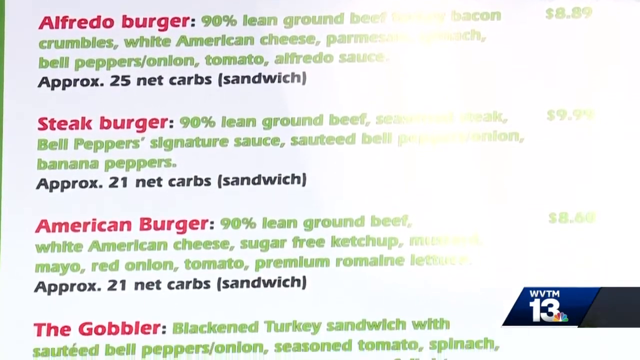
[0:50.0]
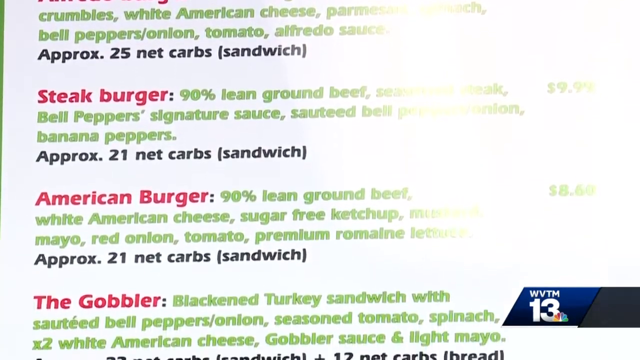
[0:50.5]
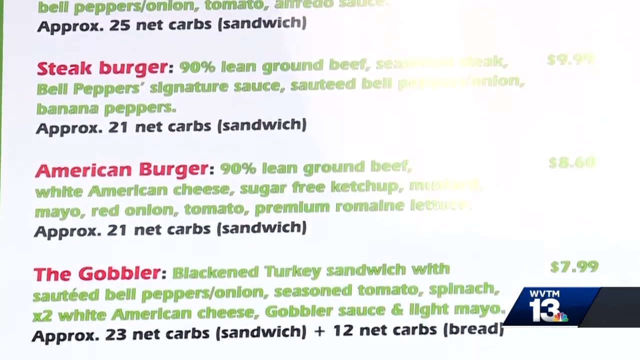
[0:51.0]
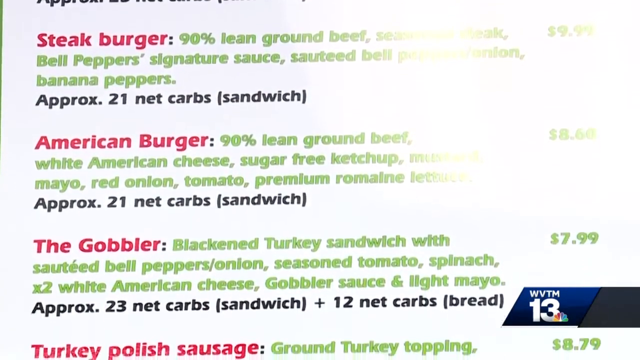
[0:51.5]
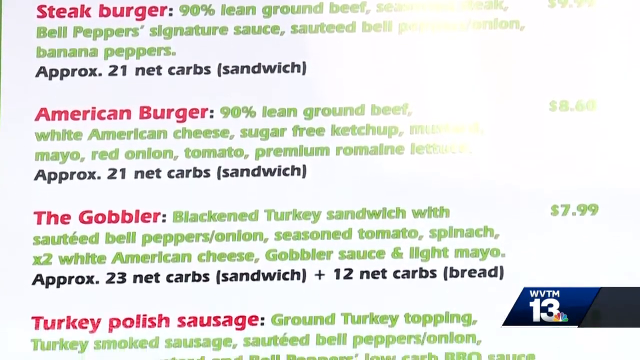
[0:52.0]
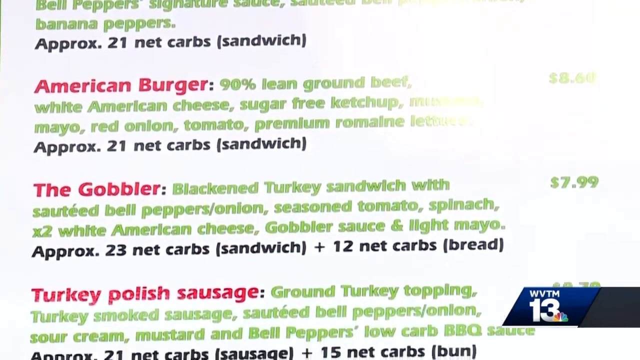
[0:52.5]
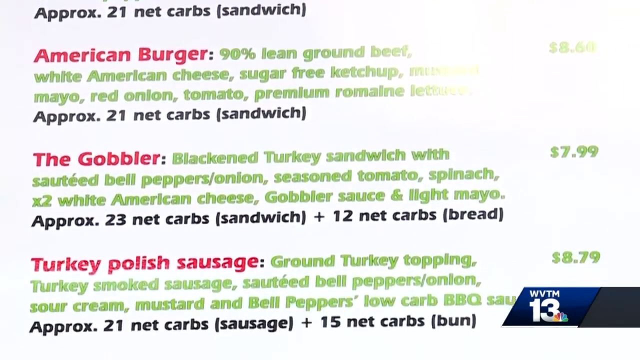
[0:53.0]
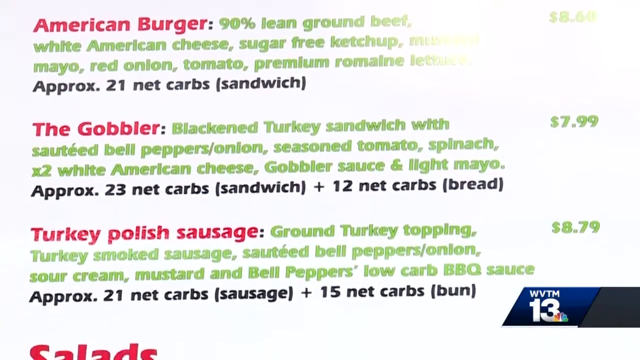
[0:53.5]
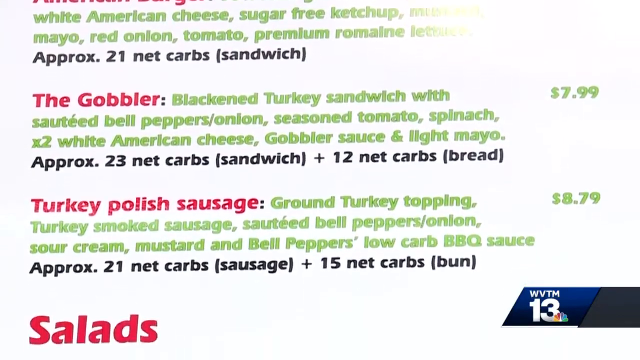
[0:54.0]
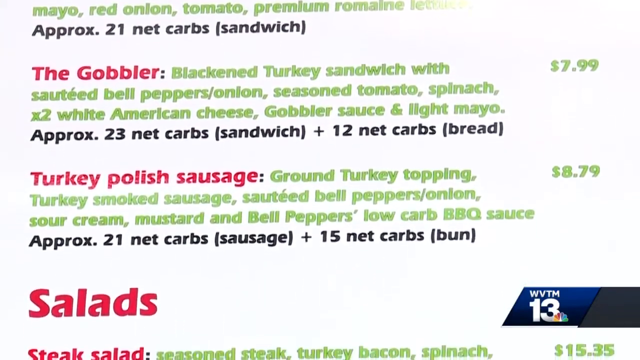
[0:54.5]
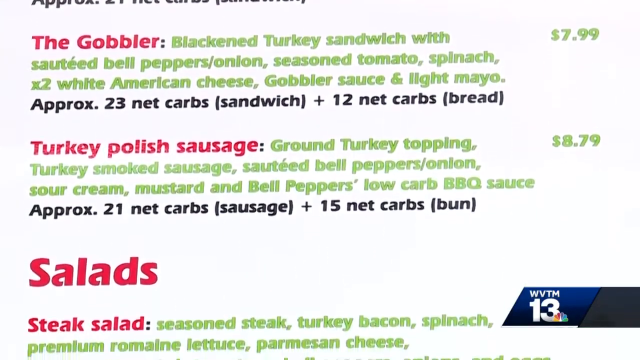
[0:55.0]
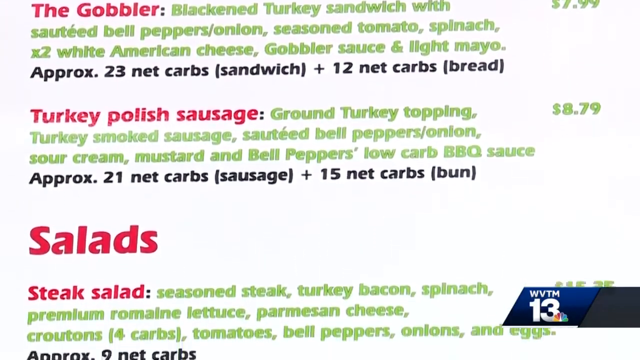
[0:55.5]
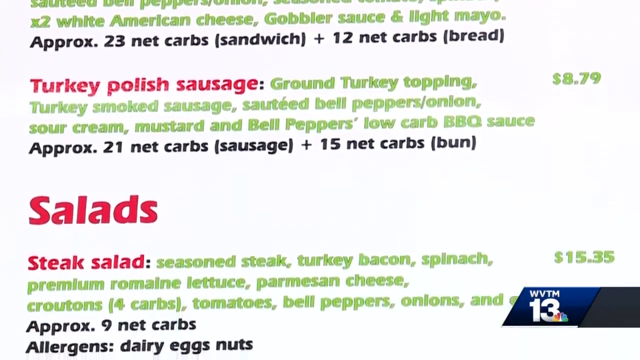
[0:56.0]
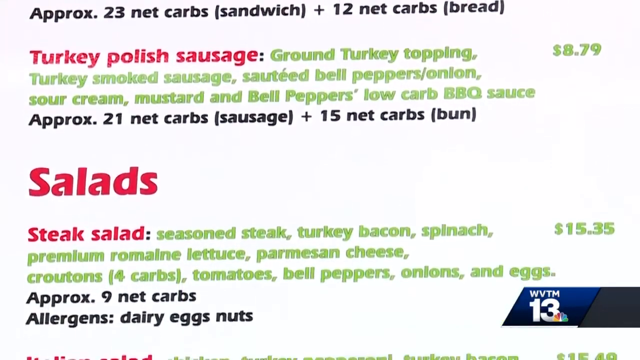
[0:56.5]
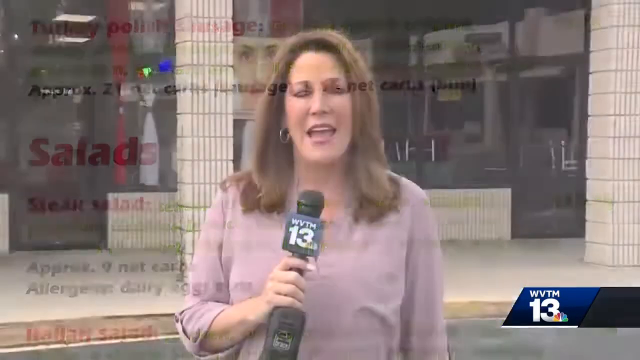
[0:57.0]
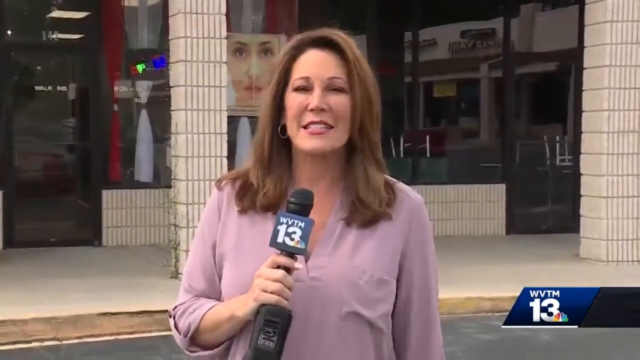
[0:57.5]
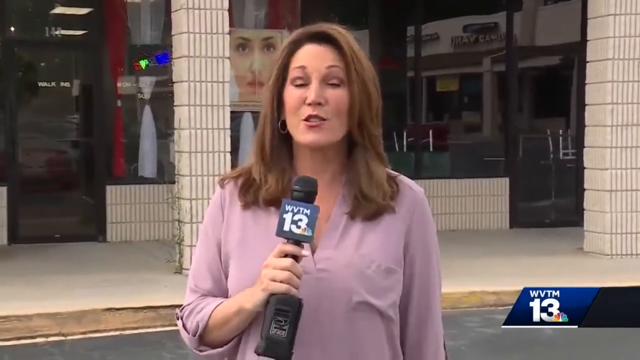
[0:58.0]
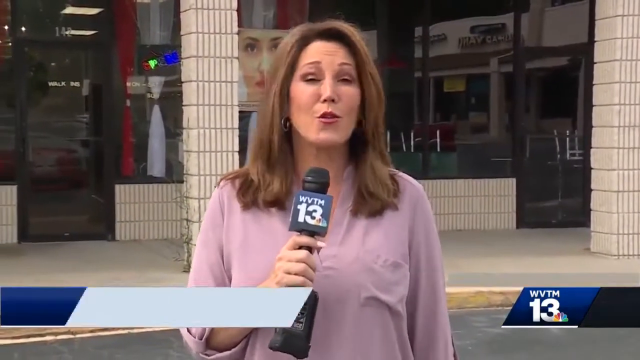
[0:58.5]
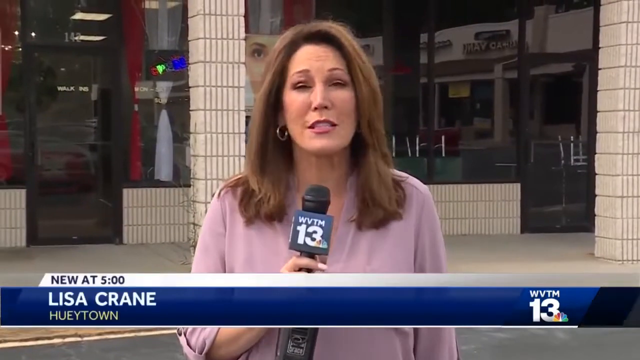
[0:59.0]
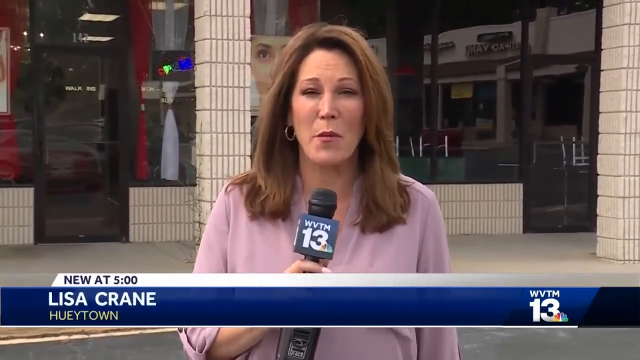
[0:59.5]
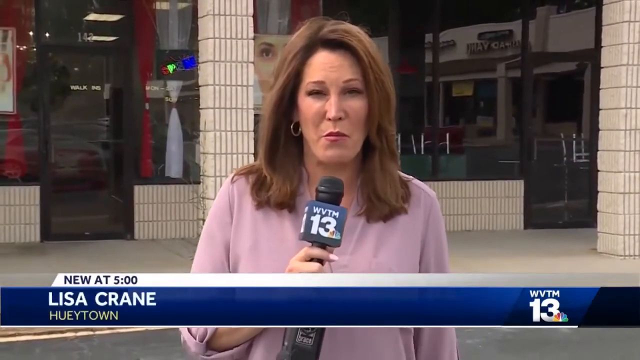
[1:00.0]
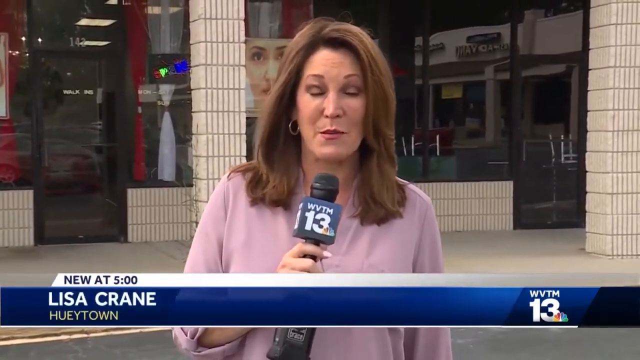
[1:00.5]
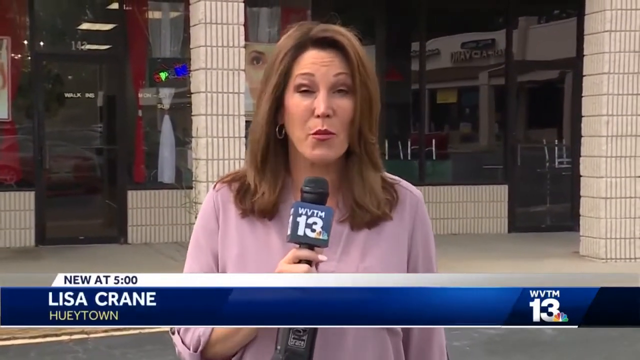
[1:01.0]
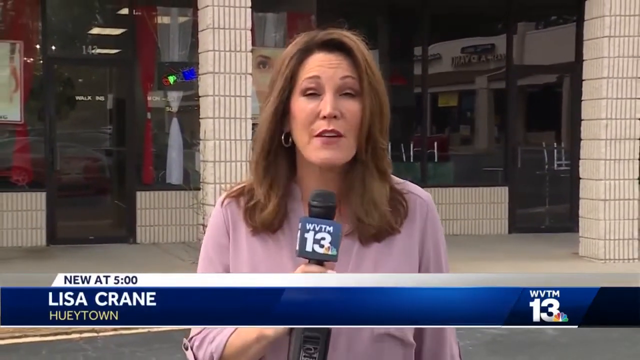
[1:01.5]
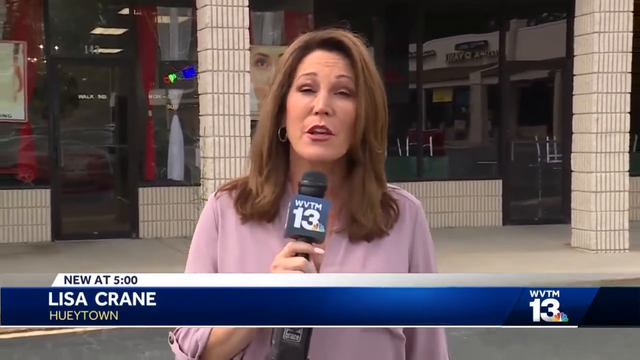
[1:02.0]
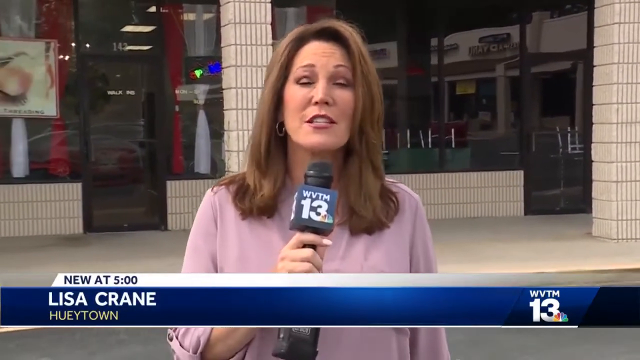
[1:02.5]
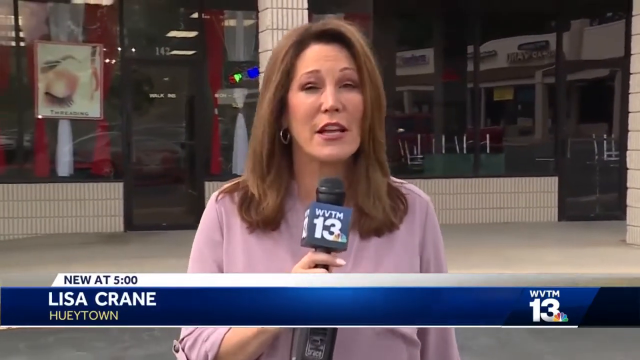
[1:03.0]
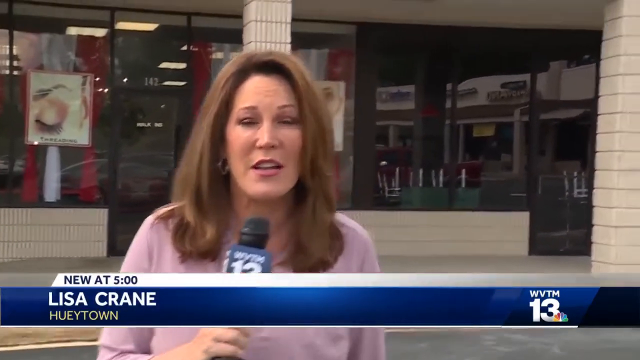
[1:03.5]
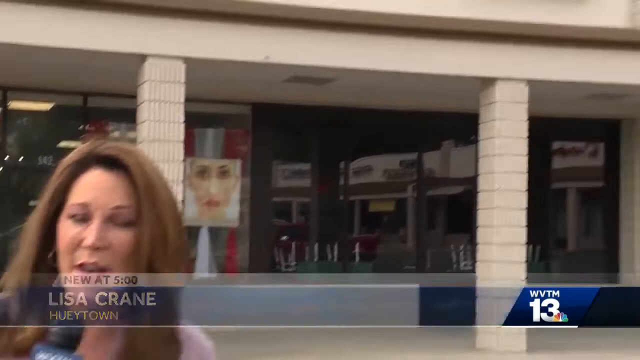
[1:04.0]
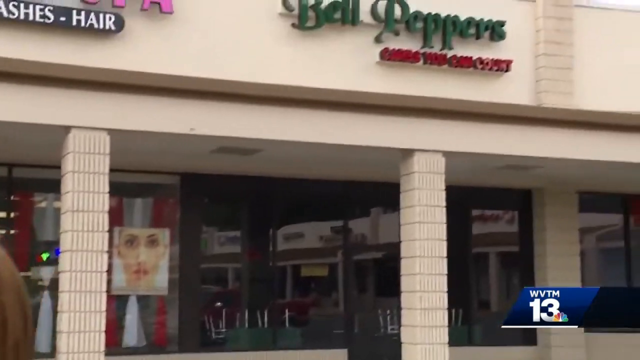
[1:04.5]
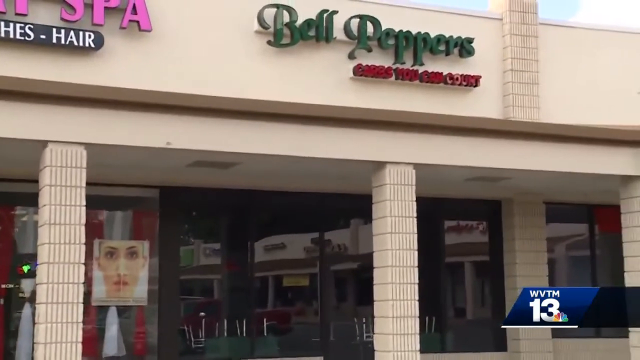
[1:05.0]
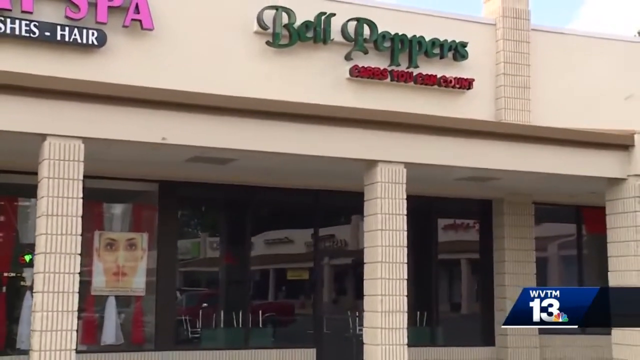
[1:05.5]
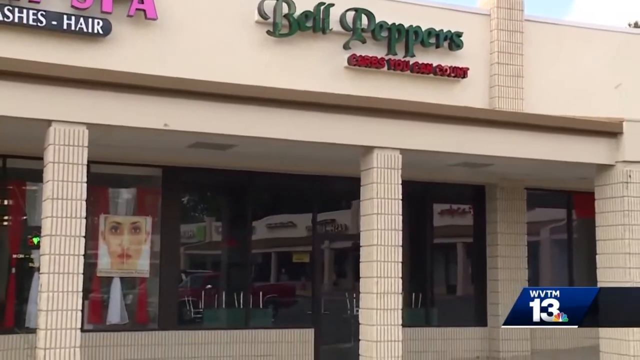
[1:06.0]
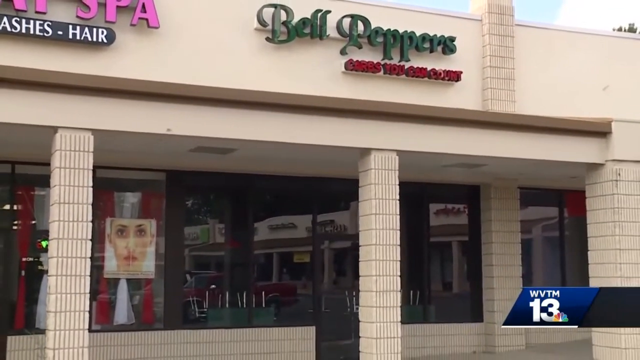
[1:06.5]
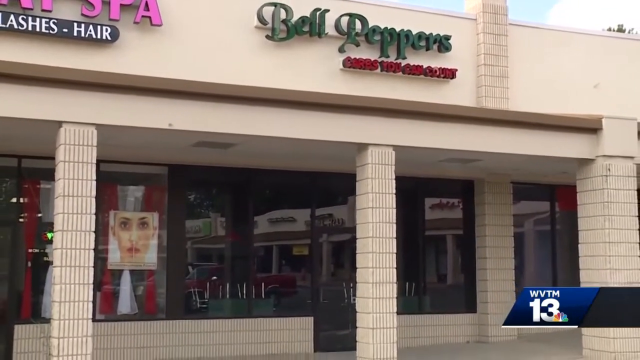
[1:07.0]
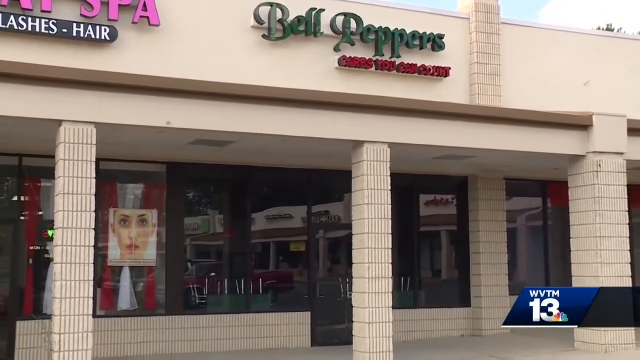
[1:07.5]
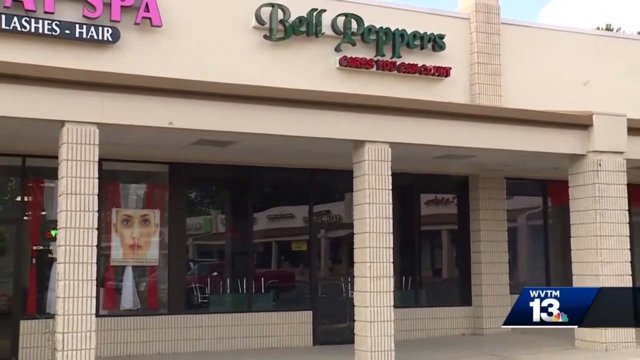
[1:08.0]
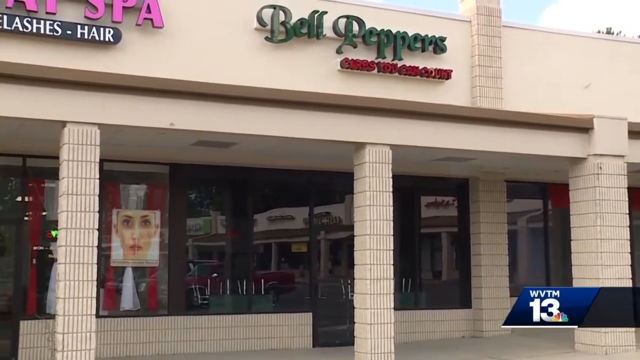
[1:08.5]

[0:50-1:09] The video shows the Alfredo Burger, the Steak Burger and the American Burger, listing the price and the ingredients for each. The first burger, the Alfredo, has approximately 25 net carbs, the most of the three; the Steak Burger and the American Burger each have approximately 21 net carbs. The Steak Burger is the most expensive of these options.